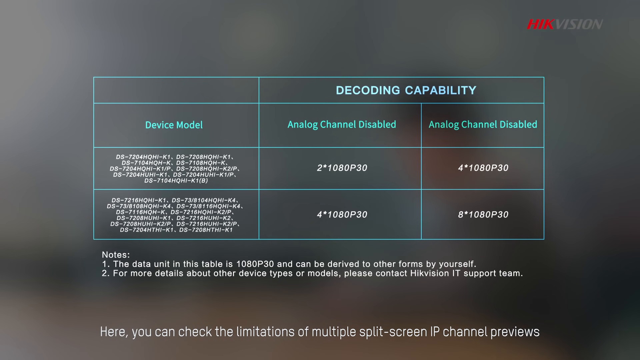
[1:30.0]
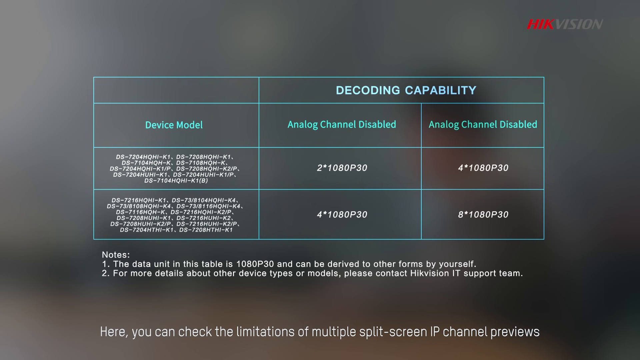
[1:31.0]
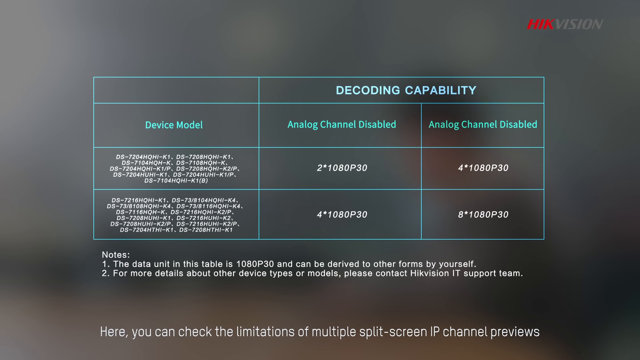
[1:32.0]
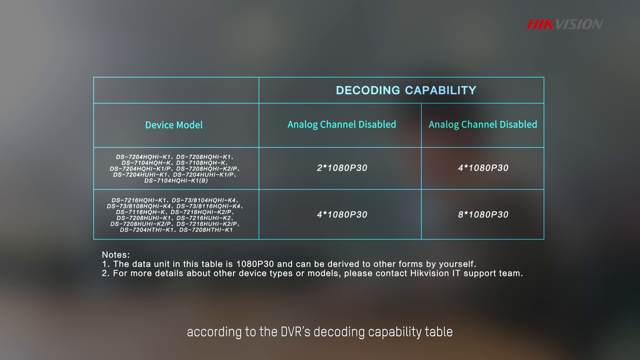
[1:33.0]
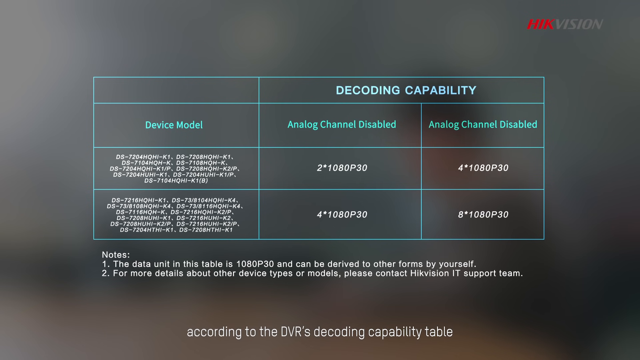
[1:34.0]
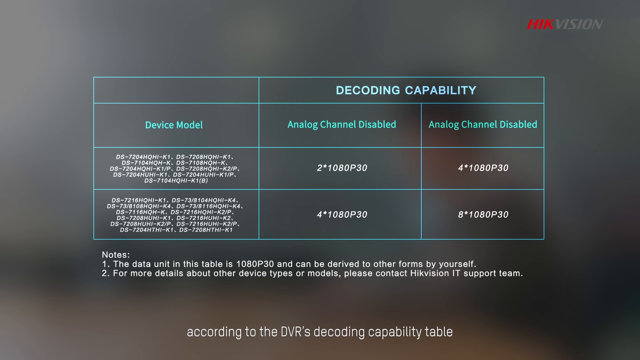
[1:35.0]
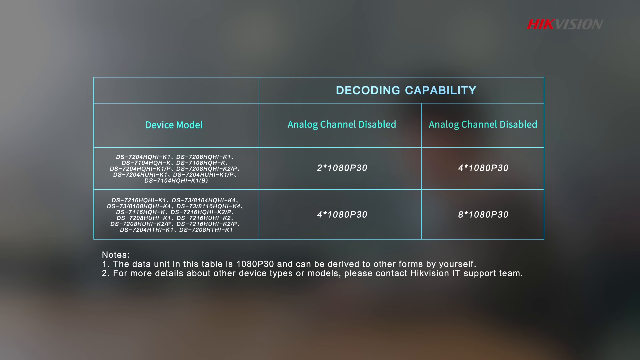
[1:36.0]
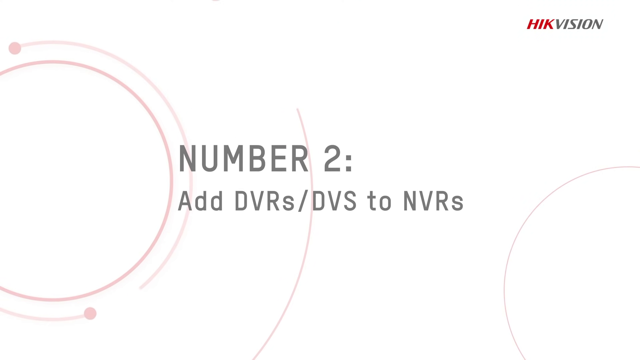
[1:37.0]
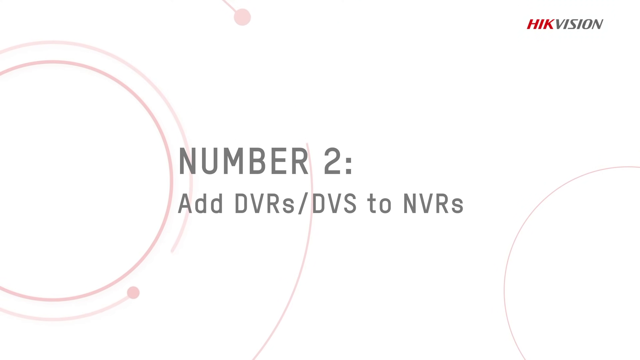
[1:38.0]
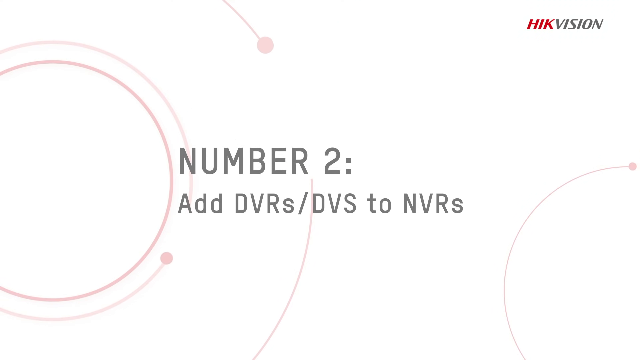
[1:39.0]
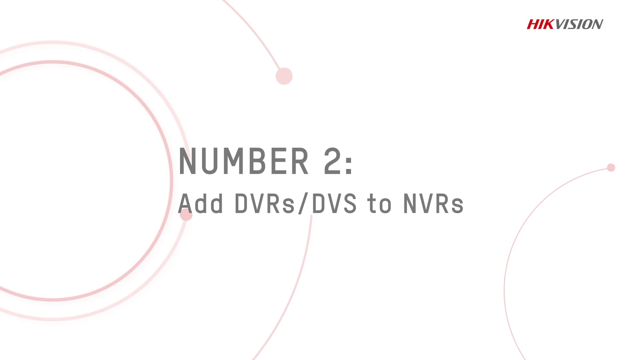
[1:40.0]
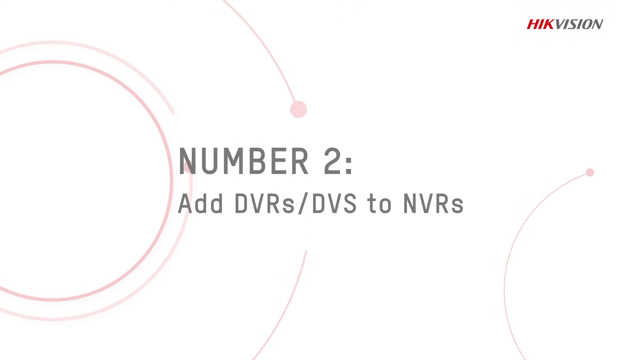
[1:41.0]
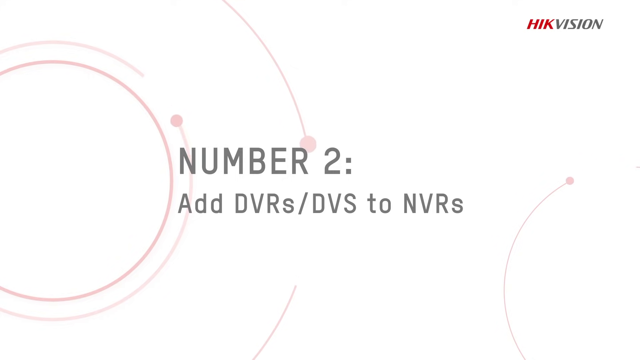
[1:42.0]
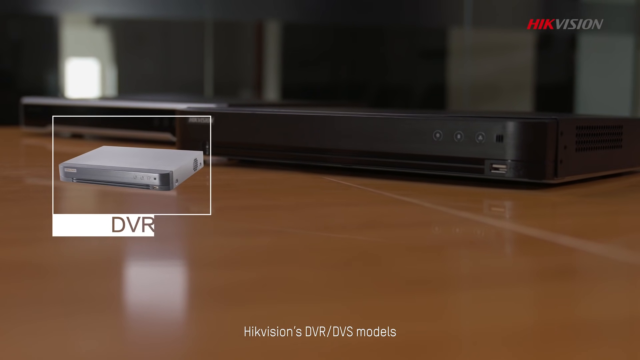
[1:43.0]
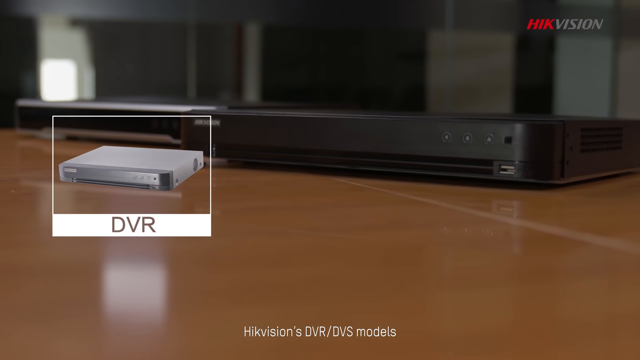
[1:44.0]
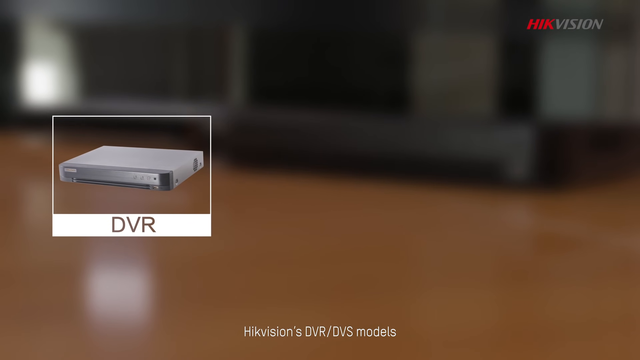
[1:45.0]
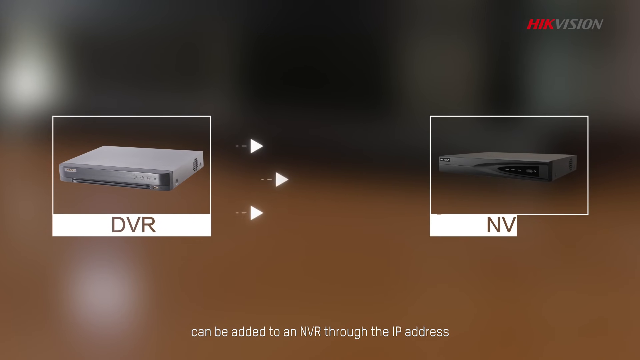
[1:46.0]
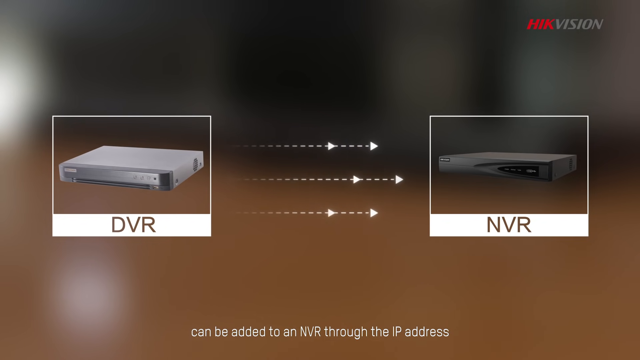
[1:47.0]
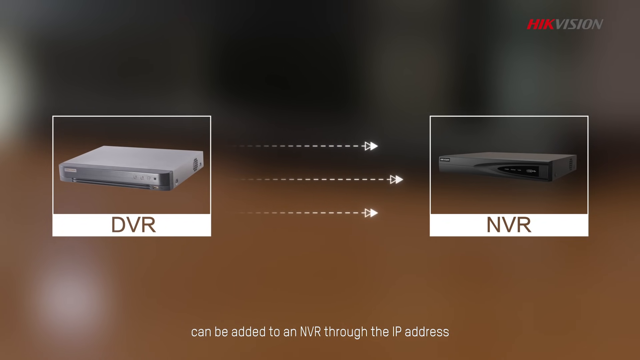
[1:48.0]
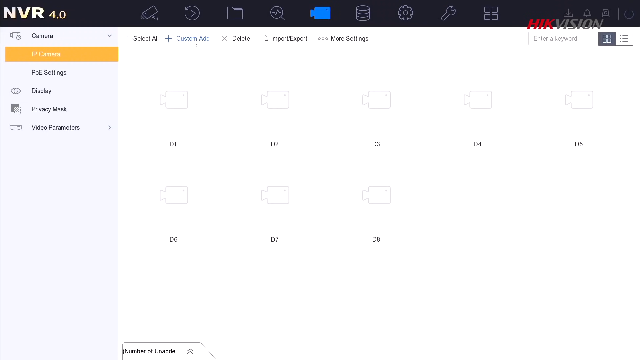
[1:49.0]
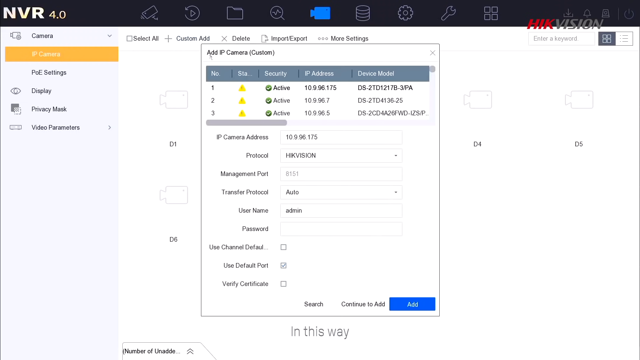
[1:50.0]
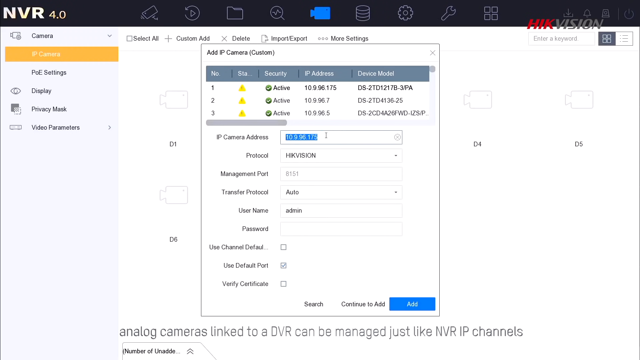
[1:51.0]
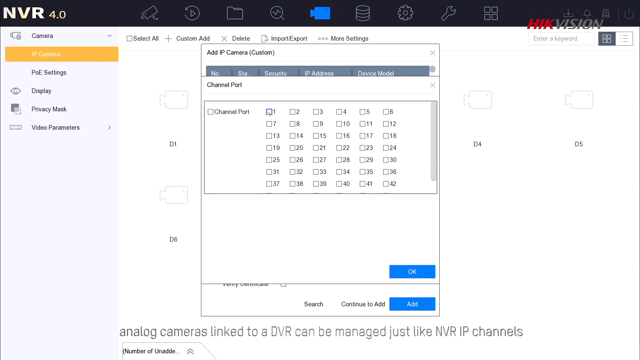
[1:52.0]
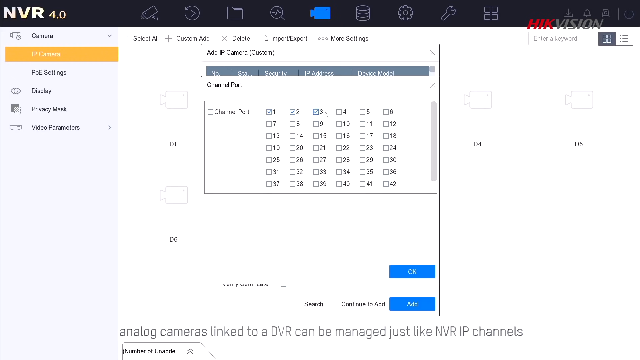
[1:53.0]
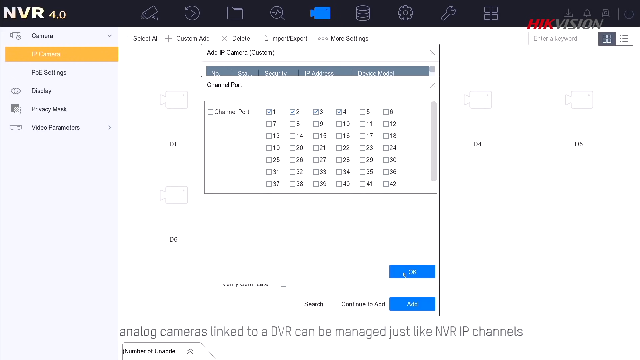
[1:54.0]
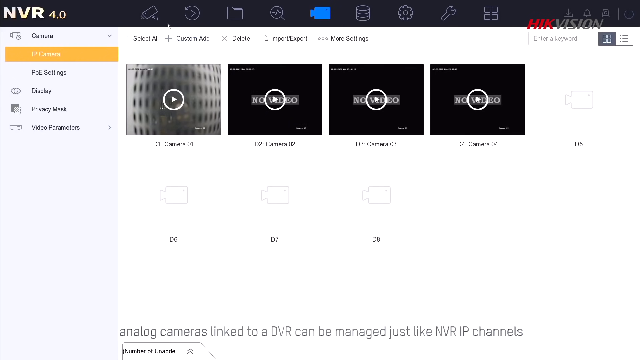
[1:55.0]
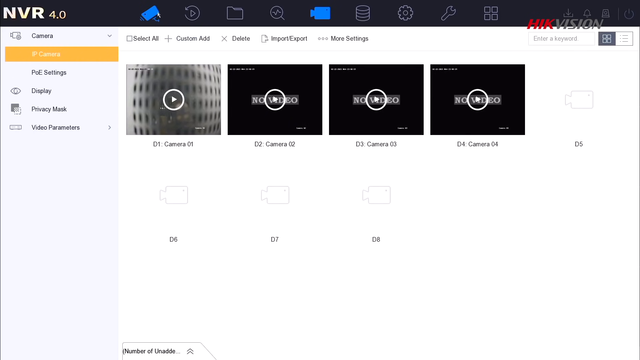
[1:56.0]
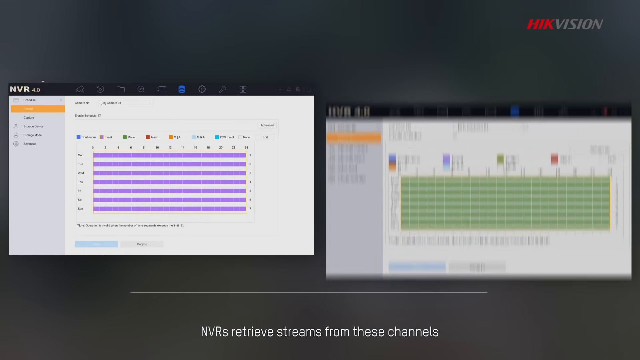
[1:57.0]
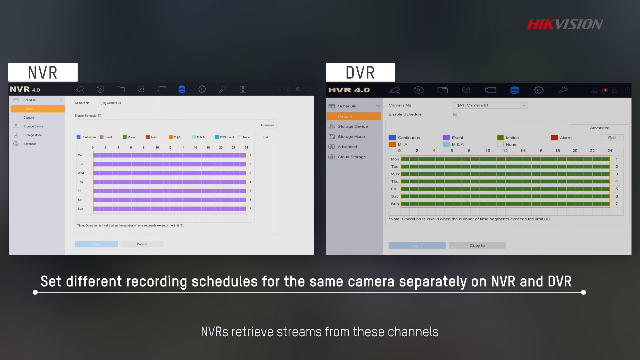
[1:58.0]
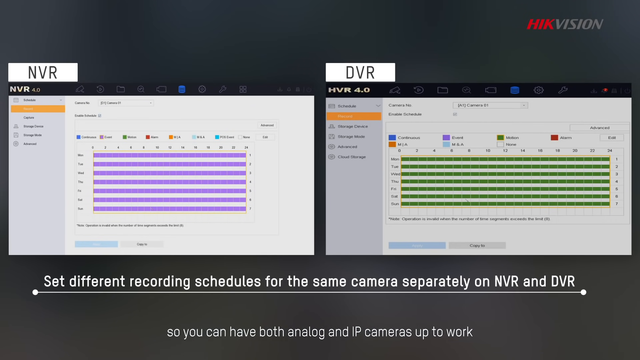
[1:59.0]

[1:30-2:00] A chart on the screen says "decoding capability." On the left is a "device model" column listing different model numbers in two rows. The next two columns both say "analog channel disabled" but contain different numbers: in the first row, "2*1080p30" and "4*1080p30"; in the row below, "4*1080p30" and "8*1080p30." A header then reads "2. add DVRs/DVS to NVRs." A receiver appears, with the word "black" before it goes blurry. In the foreground is a picture of a more silver-looking DVR with three arrows pointing to an NVR. Settings appear, and someone's screen shows them choosing different cameras to view and their settings.